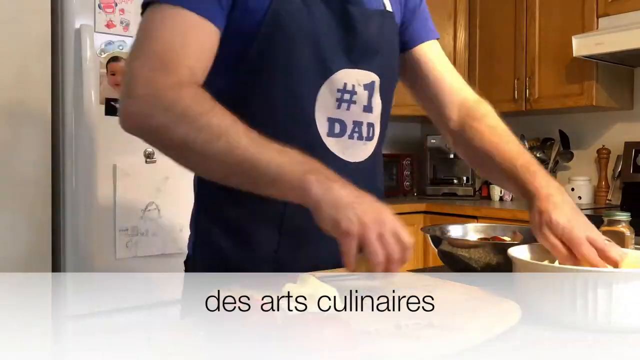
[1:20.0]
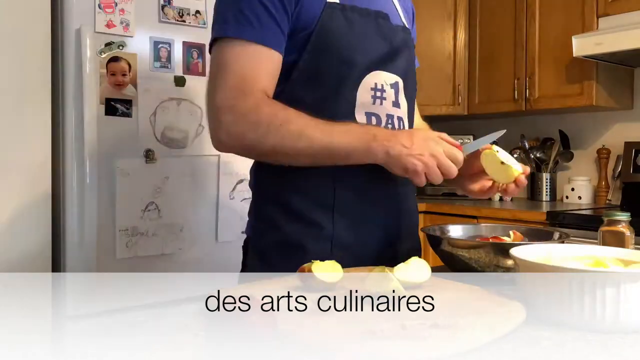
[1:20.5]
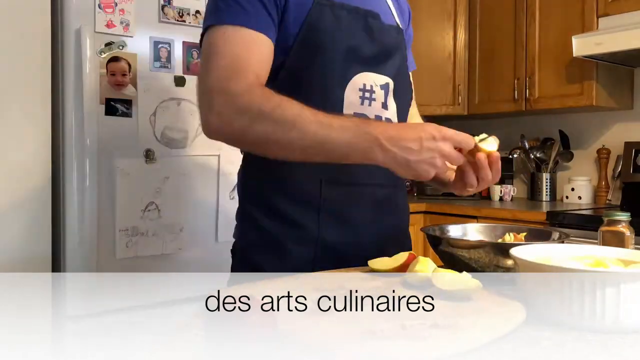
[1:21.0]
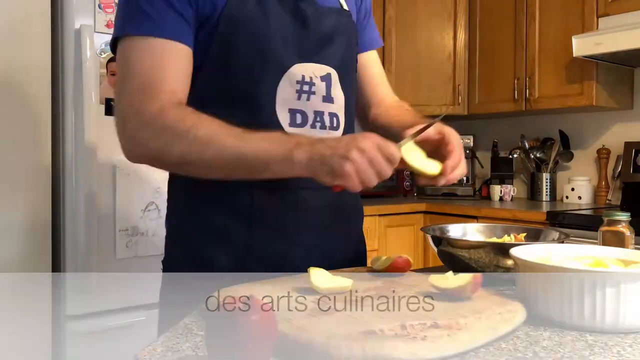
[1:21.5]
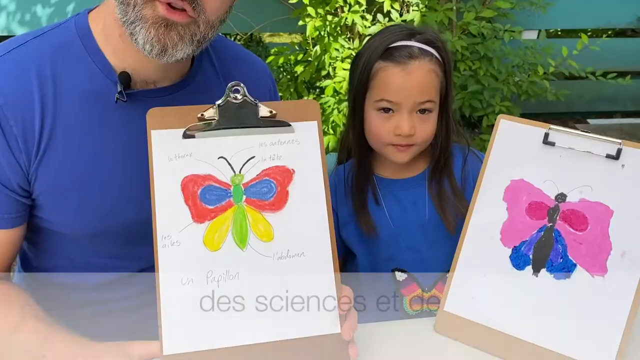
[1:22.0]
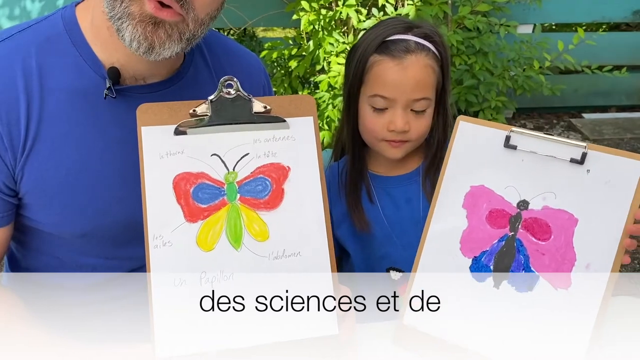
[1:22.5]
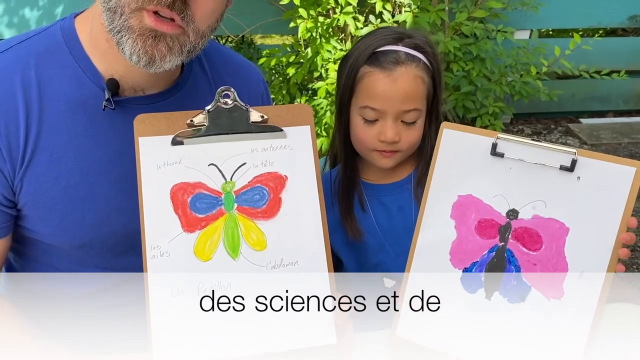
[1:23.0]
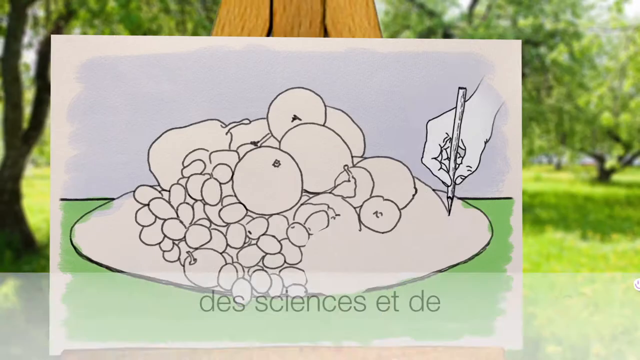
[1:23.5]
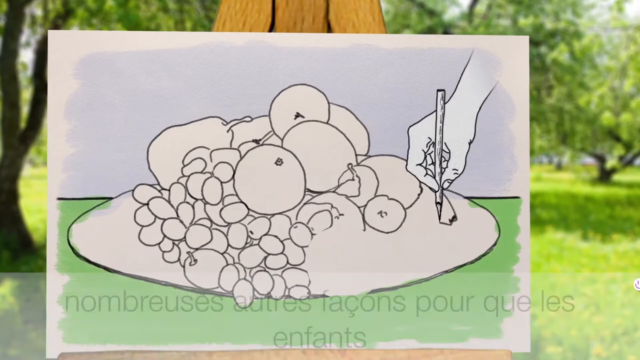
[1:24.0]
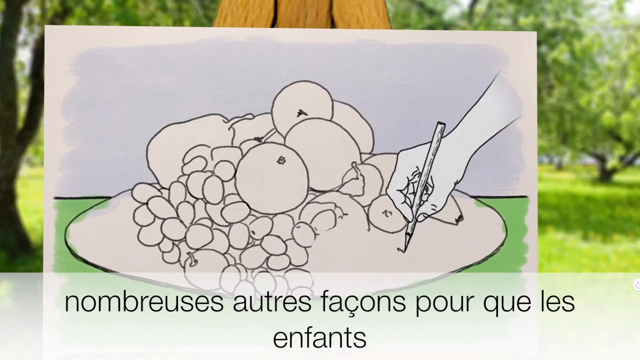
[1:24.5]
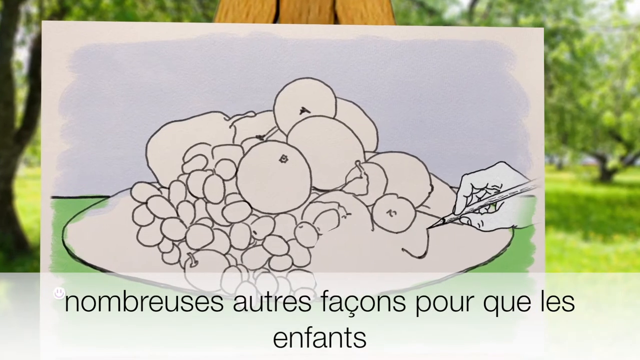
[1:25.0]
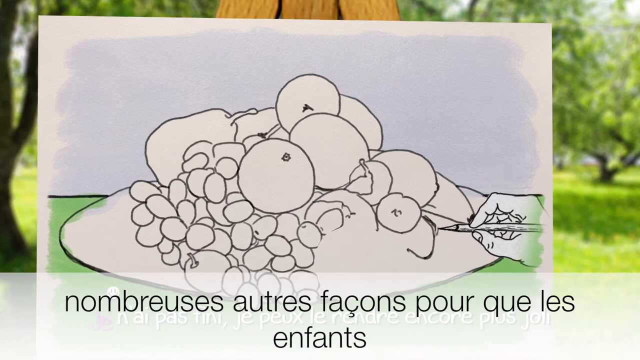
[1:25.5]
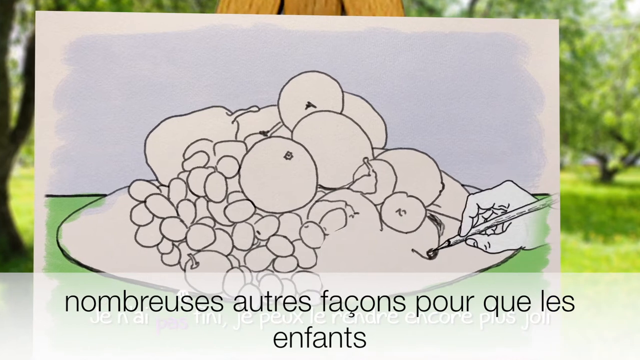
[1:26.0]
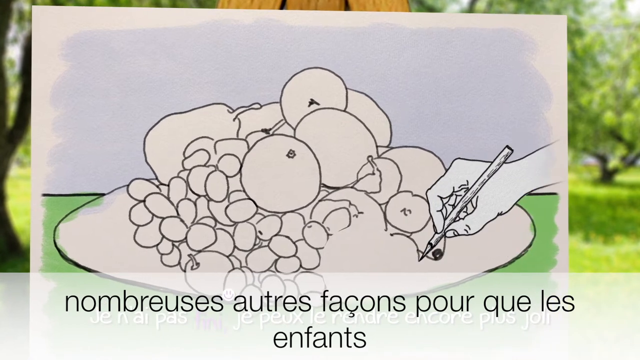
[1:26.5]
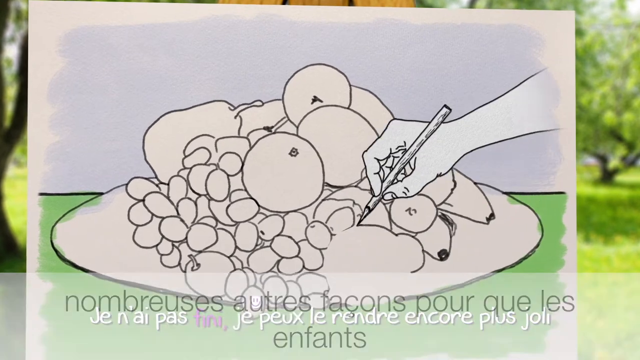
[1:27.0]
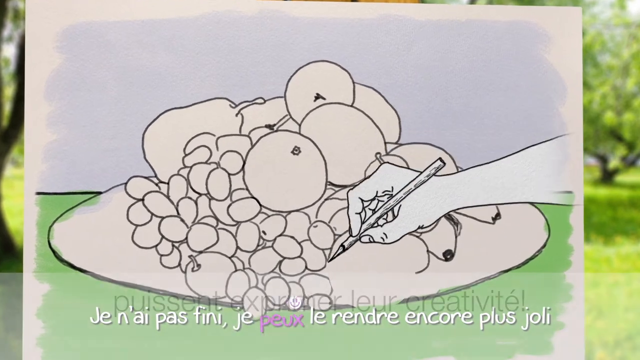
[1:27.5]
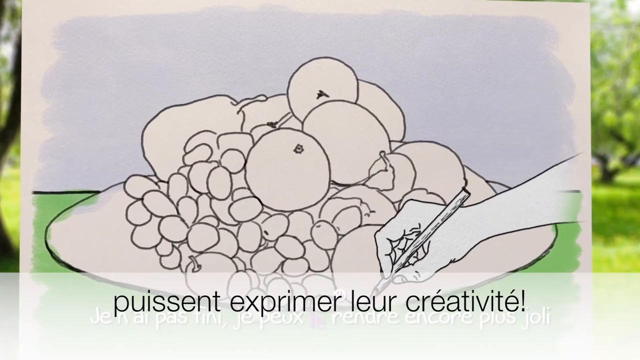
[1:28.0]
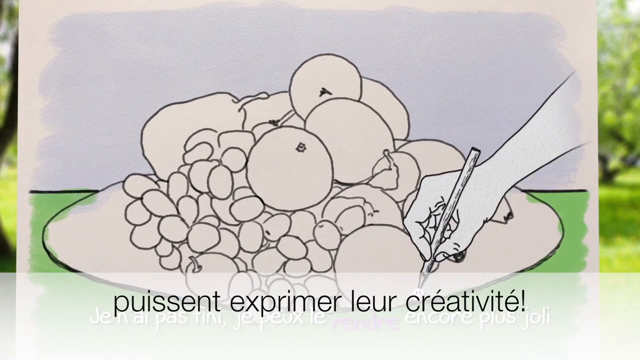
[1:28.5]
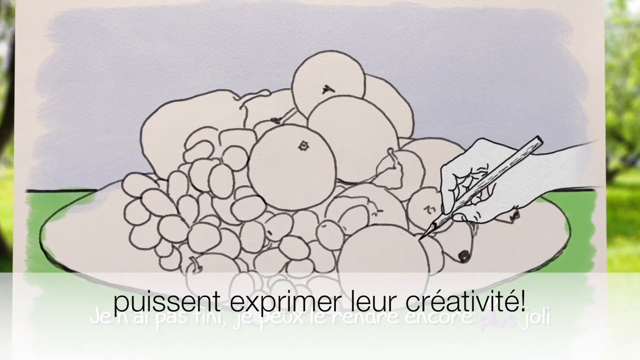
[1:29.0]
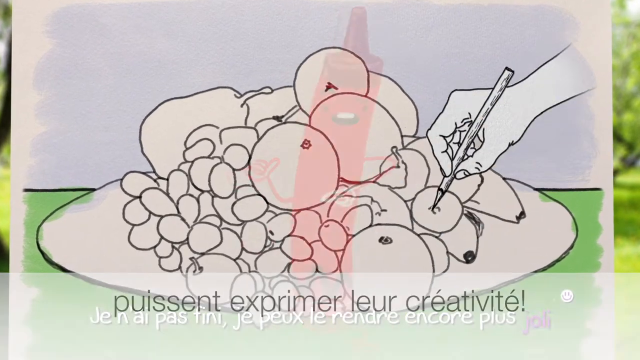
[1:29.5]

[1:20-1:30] A Caucasian person is shown from about the chest down, with the head and face out of view; it appears to be a man. He wears a navy blue apron with a white circle in the middle of the stomach or chest area, and in the middle of the circle, in blue font, it reads "number one dad". A refrigerator is in the left background, and in the right background behind him are kitchen cabinets, a vent, a hood, and some utensils and appliances on the counter. Black text at the bottom of the screen reads "DES arts CULINAIRES". The person holds a knife and is cutting what appear to be apples into a bowl. The scene then changes to an adult man sitting next to a girl or child.